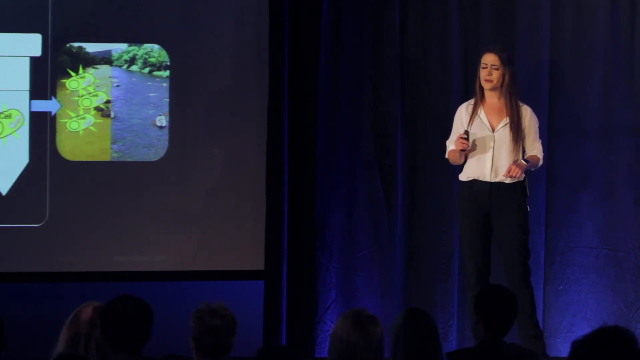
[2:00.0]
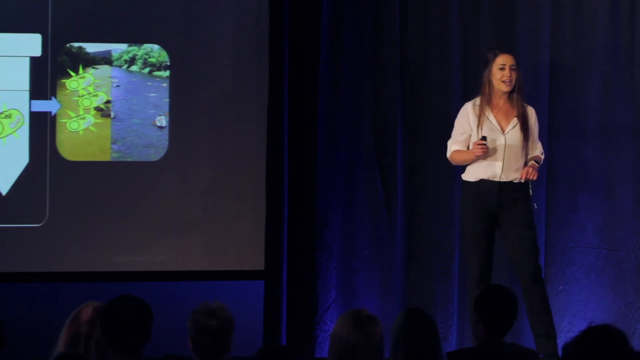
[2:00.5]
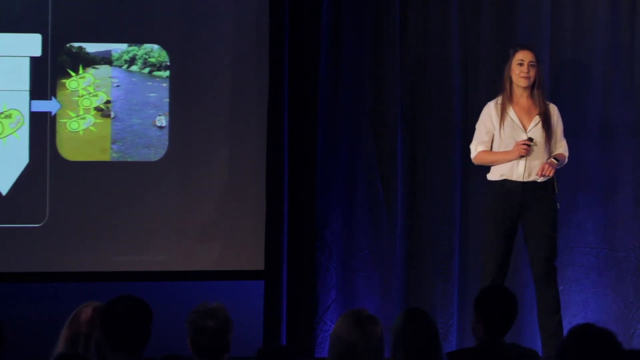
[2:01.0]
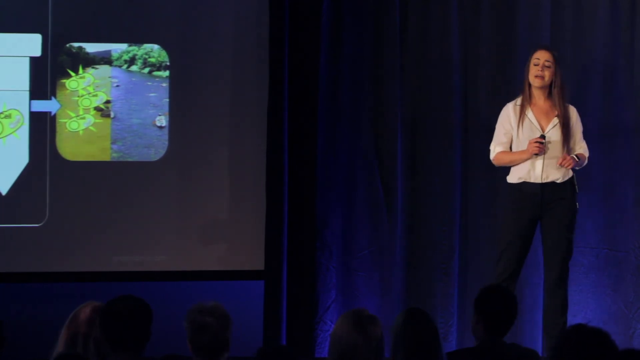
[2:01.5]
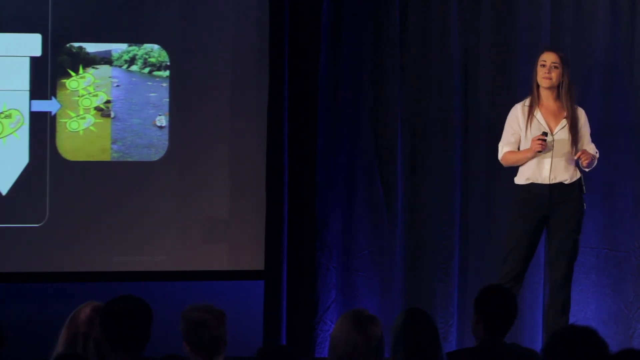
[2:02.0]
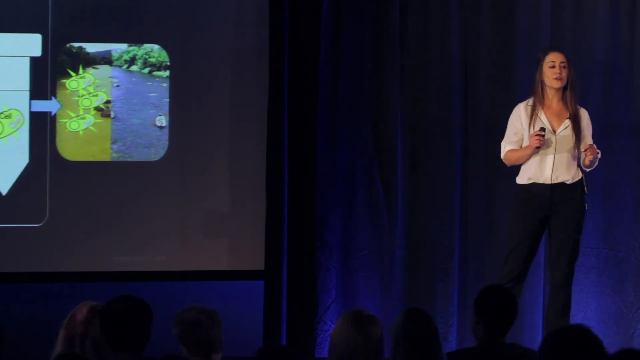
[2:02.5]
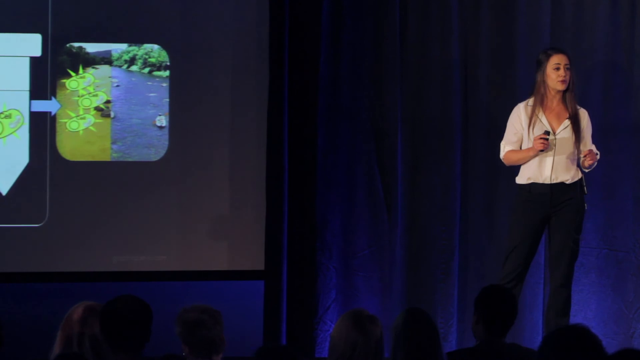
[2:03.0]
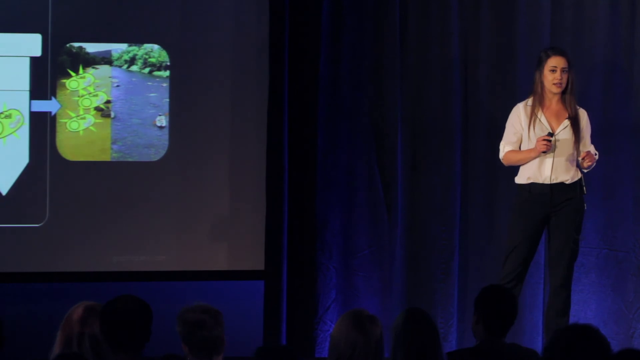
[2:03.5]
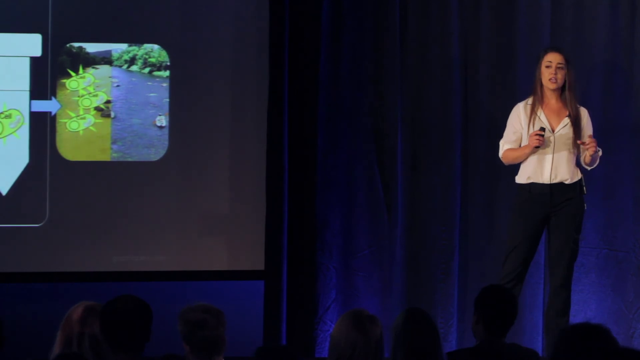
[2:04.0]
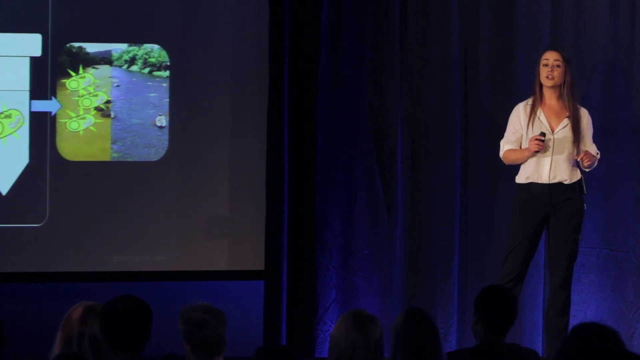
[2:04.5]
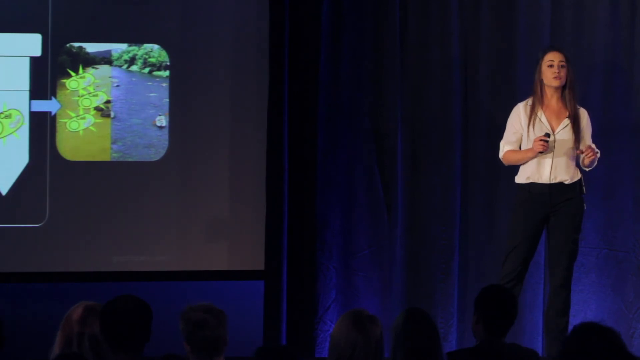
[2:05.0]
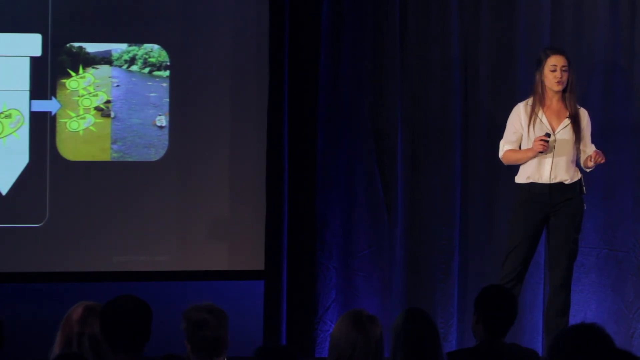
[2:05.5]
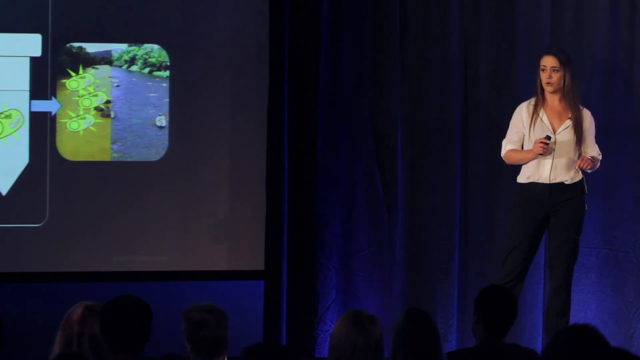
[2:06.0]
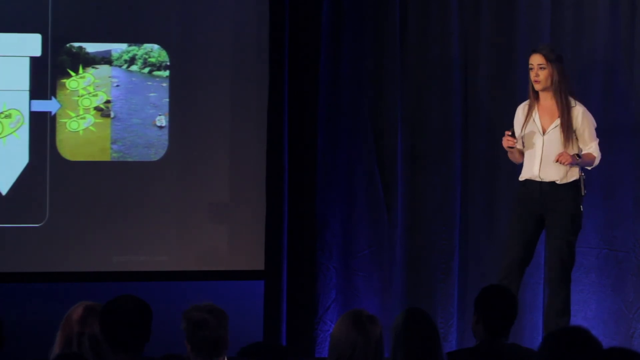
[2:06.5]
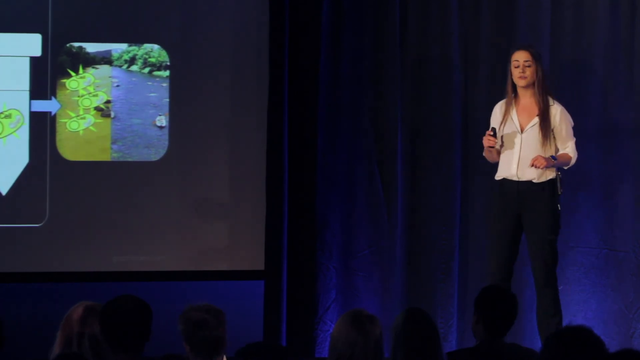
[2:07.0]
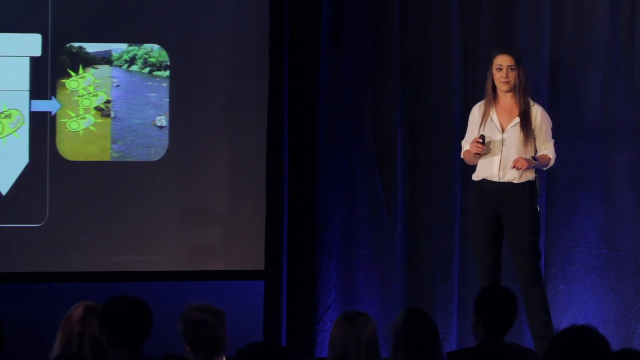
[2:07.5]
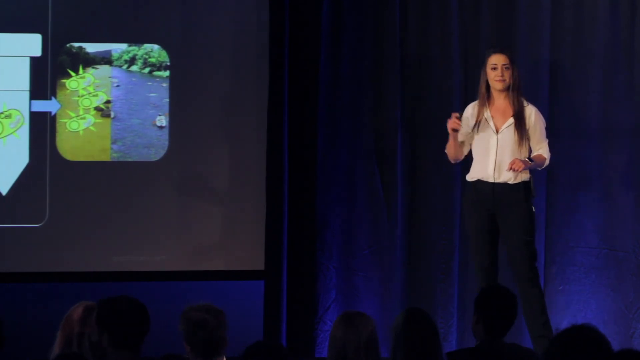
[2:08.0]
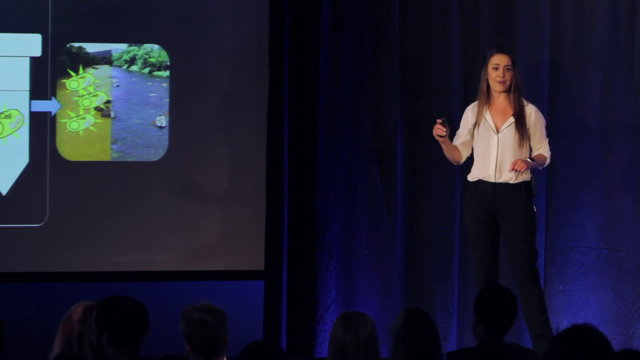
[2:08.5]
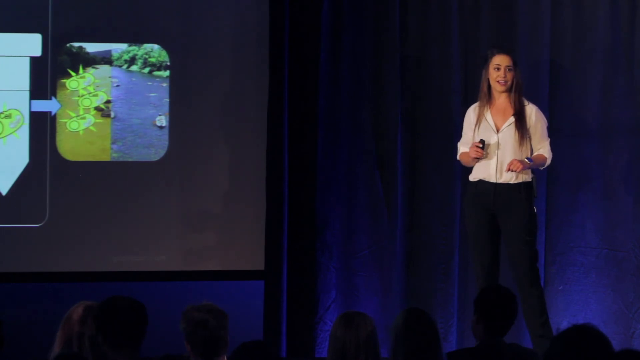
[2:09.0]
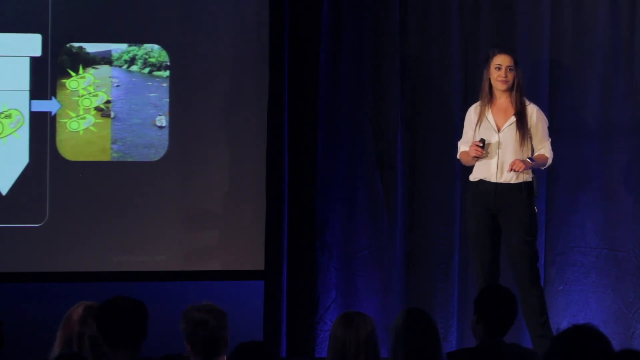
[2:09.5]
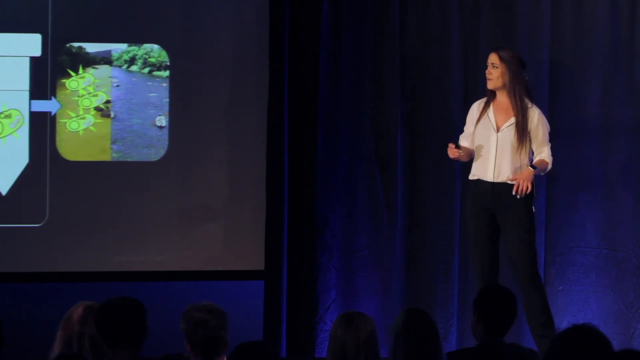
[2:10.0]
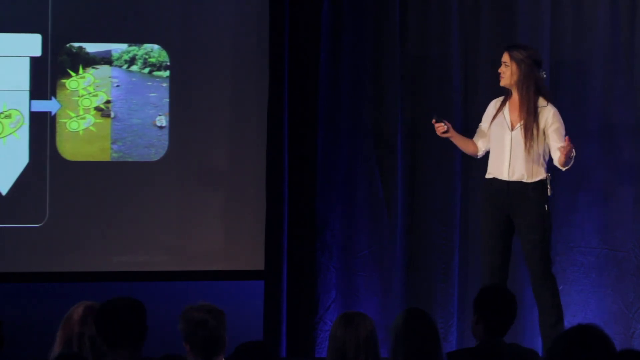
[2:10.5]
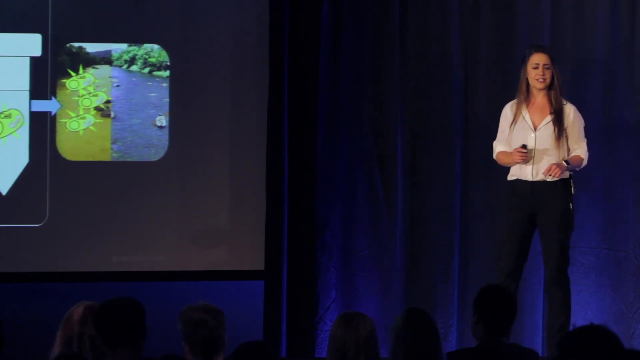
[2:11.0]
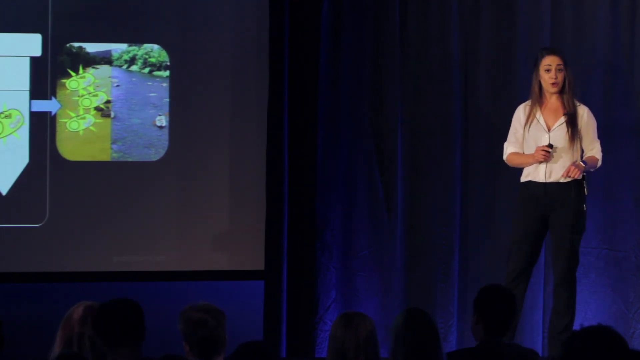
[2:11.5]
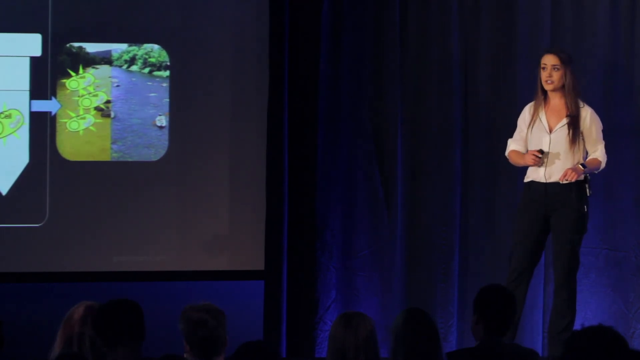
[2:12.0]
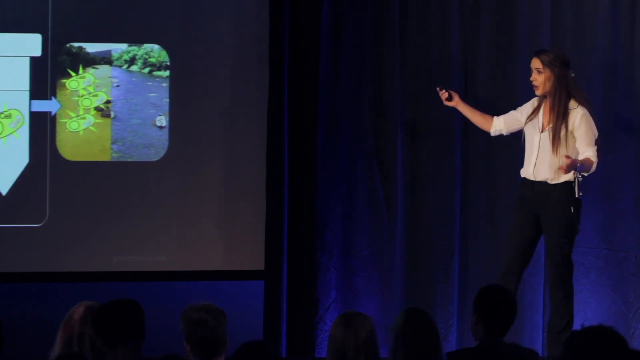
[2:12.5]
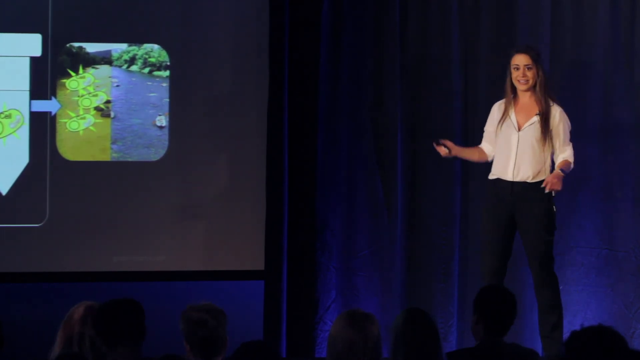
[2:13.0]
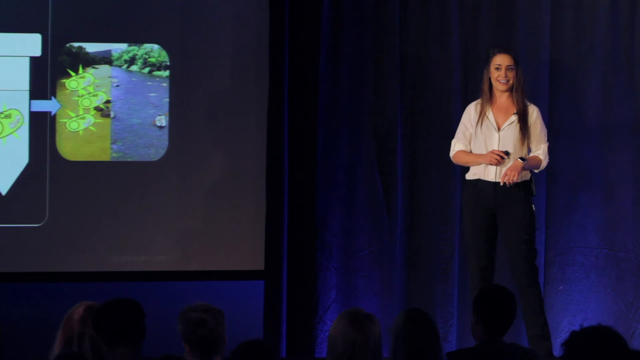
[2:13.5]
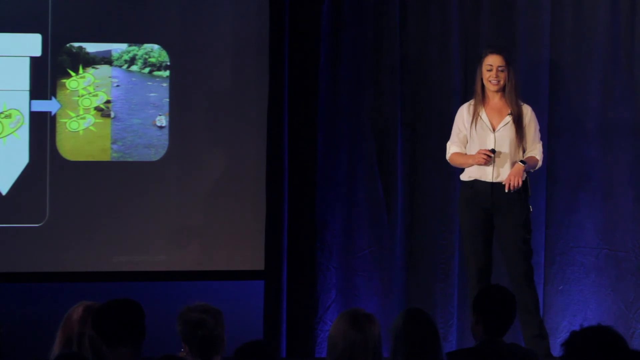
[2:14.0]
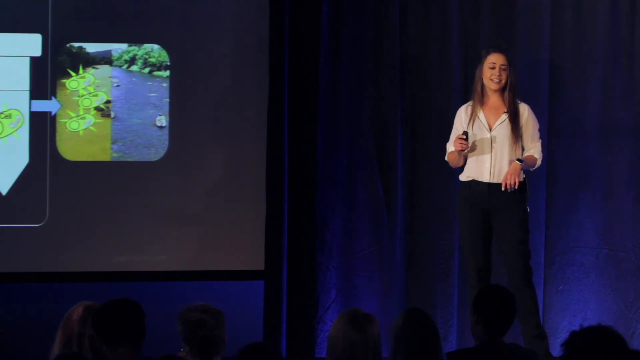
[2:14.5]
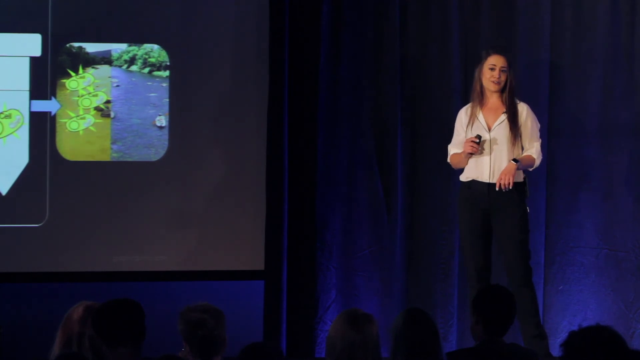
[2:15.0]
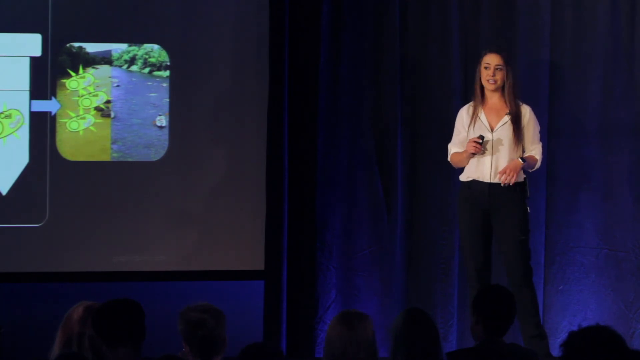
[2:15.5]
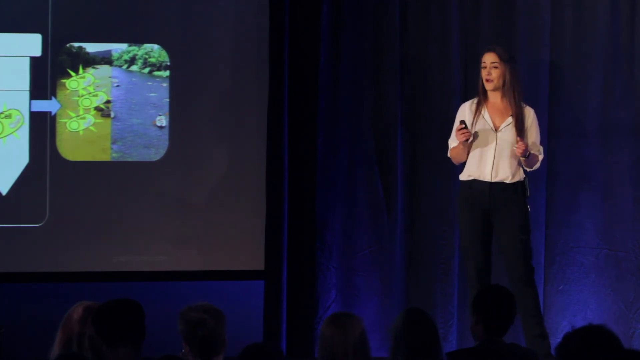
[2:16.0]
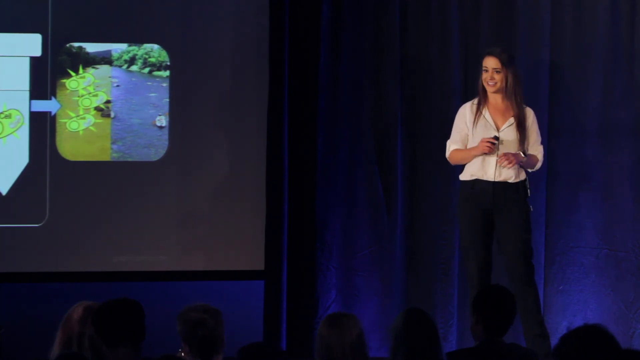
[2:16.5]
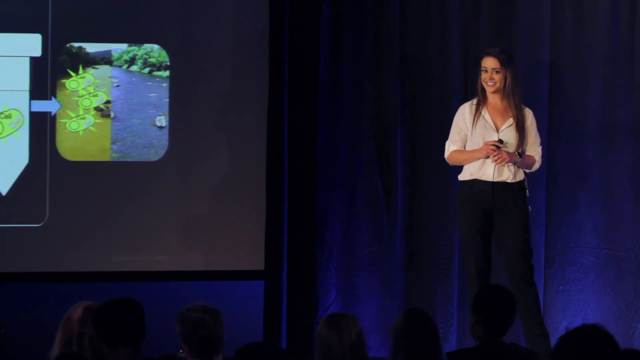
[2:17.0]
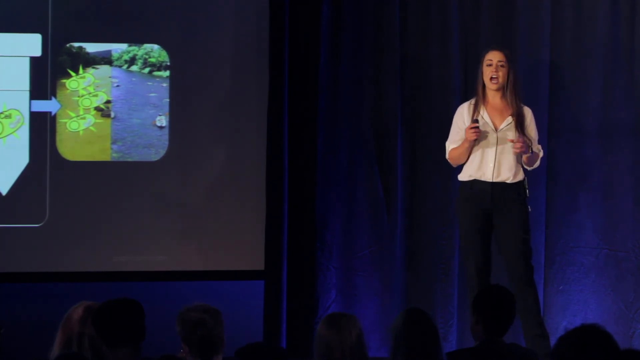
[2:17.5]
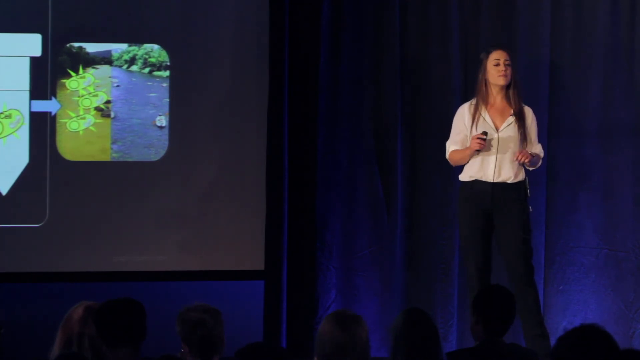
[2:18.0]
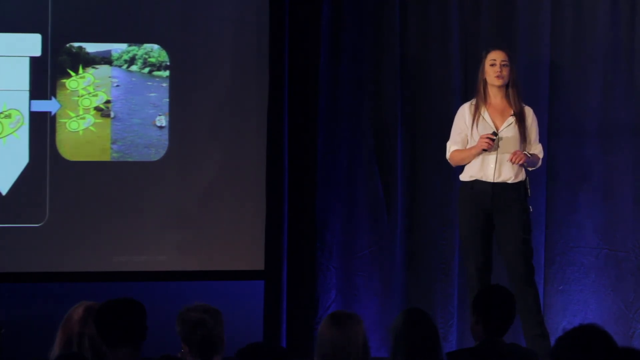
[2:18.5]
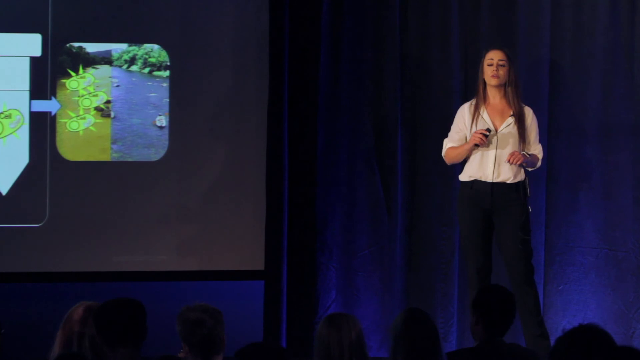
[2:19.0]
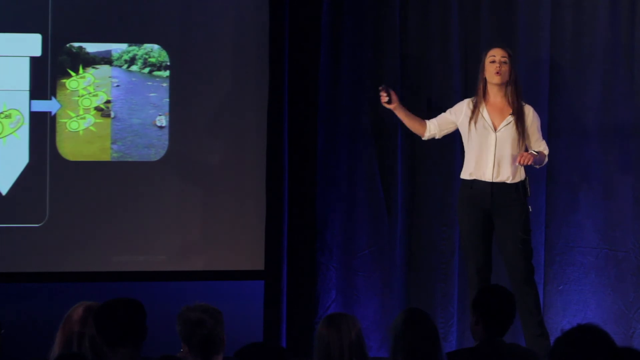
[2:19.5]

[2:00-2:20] In a TED Talk-style shot, a woman on the right wears a white dress shirt and black slacks and a smartwatch, and holds a clicker in her other hand. A projection screen is to her left, a blue curtain is visible behind her, and audience members' heads are at the bottom of the foreground. She keeps alternating her gaze between the audience and the projection screen, which shows a series of graphics and words, including a theoretical before-and-after picture: dirty, murky water on one side and clean water on the other. She continues speaking, gesturing a little with her arm toward the screen, looking toward it and back at the audience, and bringing her arm out and back in. She is the focal point, seen up close, and seems very passionate based on her body language. She smiles occasionally as she engages with the audience.